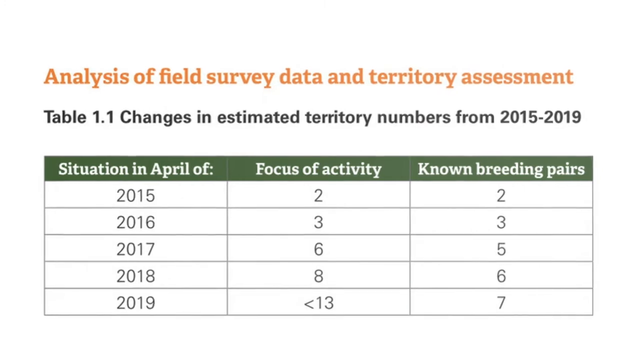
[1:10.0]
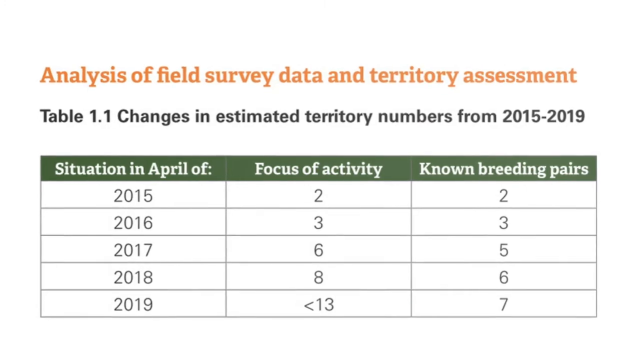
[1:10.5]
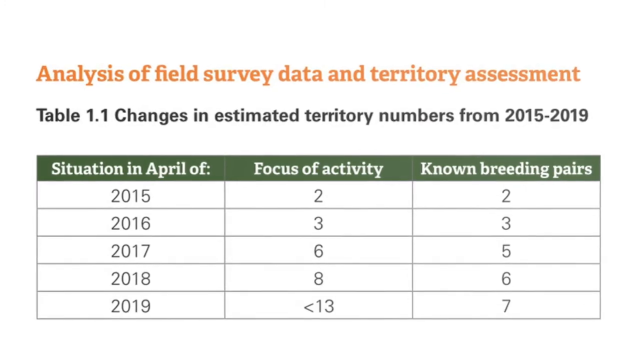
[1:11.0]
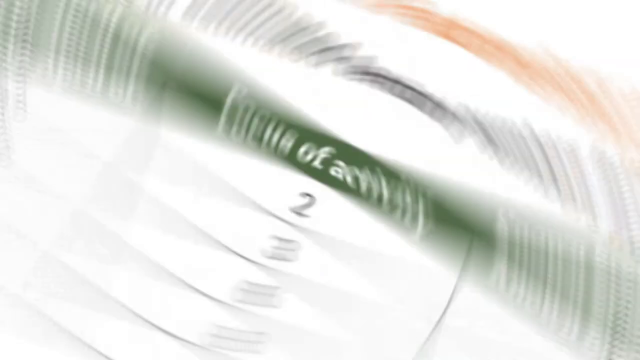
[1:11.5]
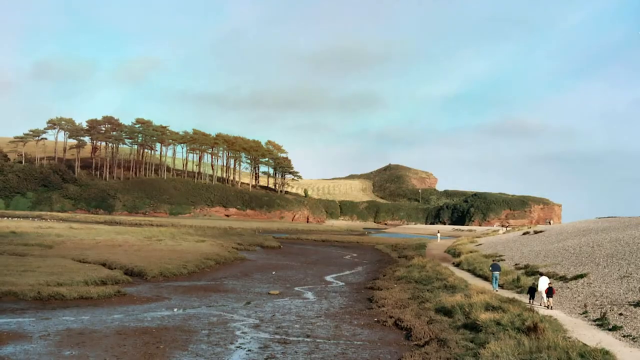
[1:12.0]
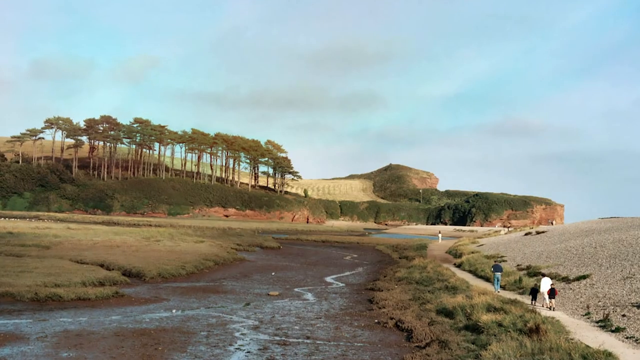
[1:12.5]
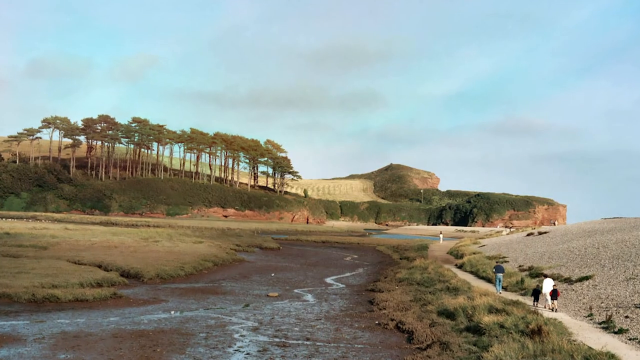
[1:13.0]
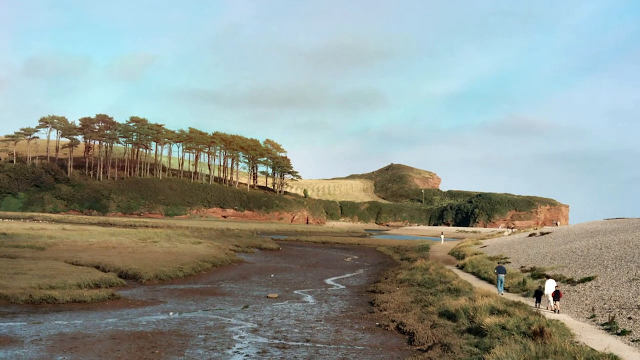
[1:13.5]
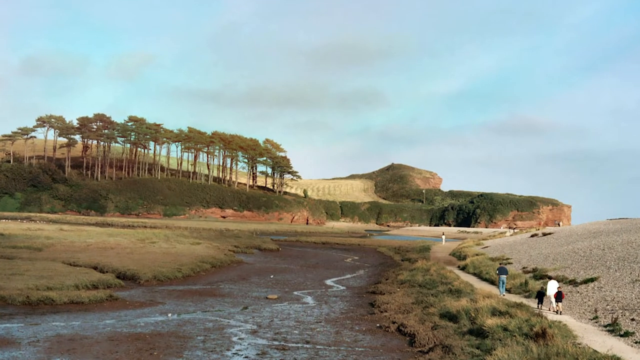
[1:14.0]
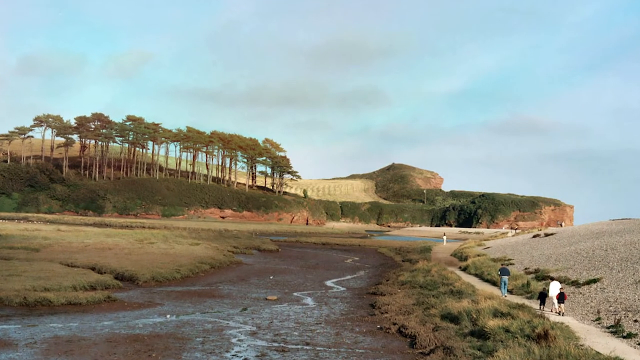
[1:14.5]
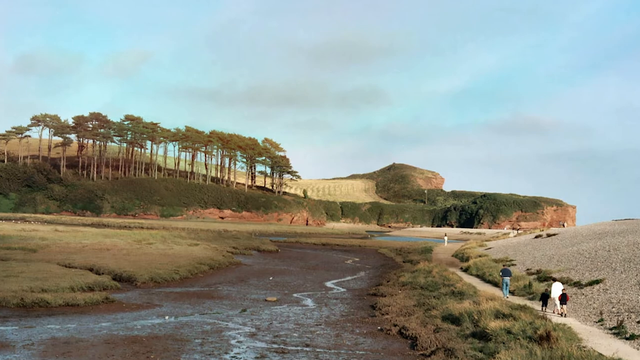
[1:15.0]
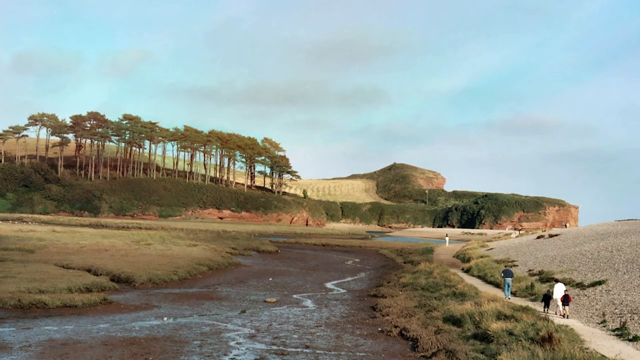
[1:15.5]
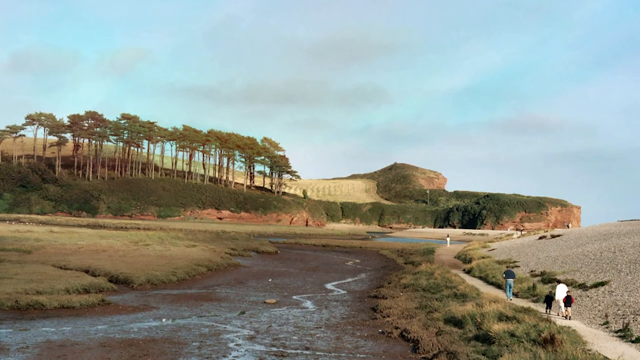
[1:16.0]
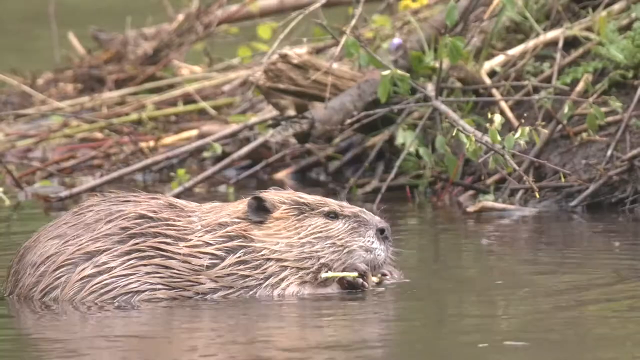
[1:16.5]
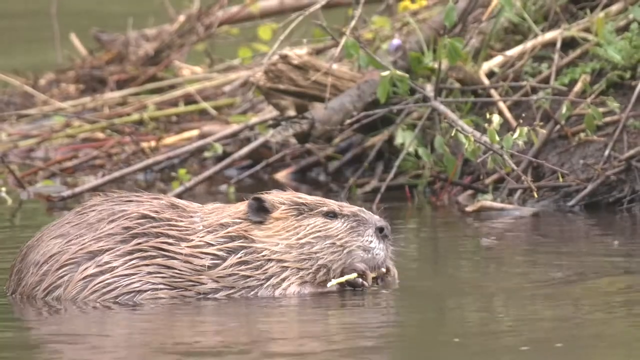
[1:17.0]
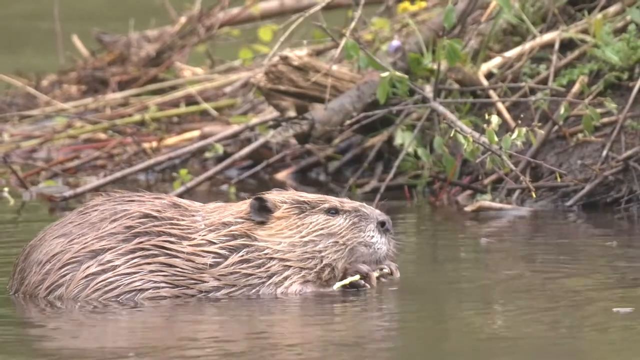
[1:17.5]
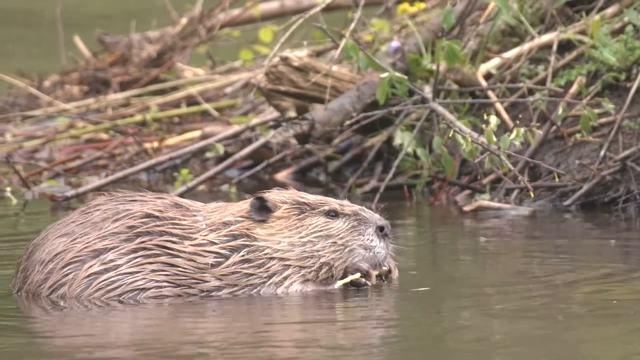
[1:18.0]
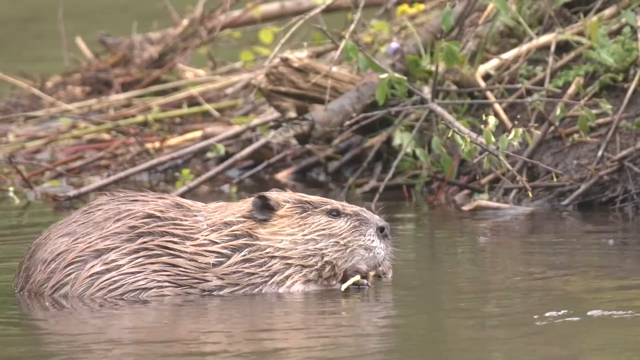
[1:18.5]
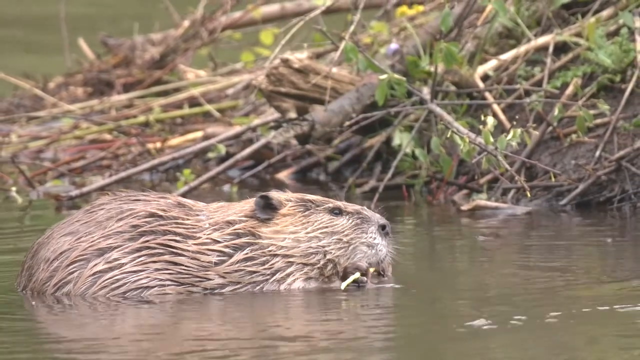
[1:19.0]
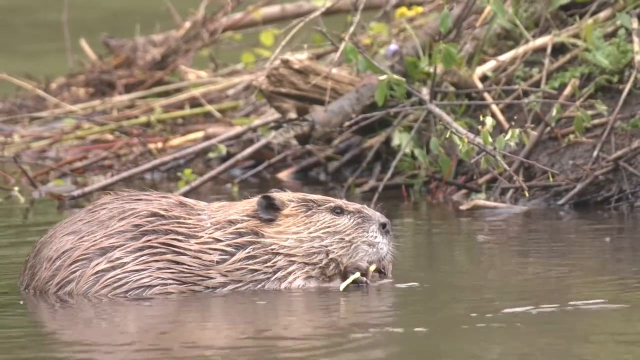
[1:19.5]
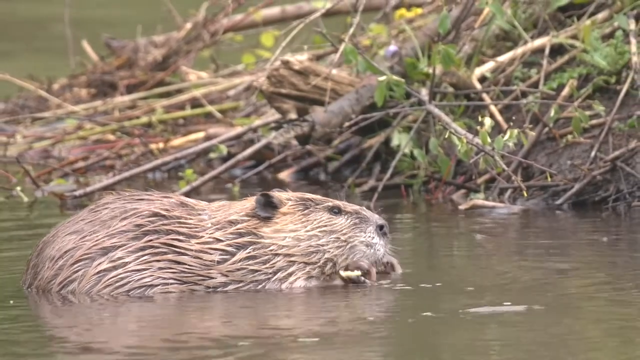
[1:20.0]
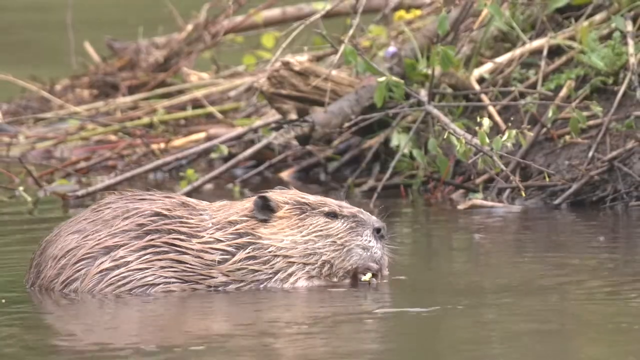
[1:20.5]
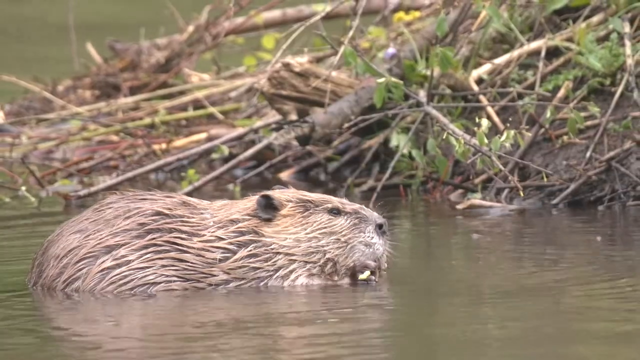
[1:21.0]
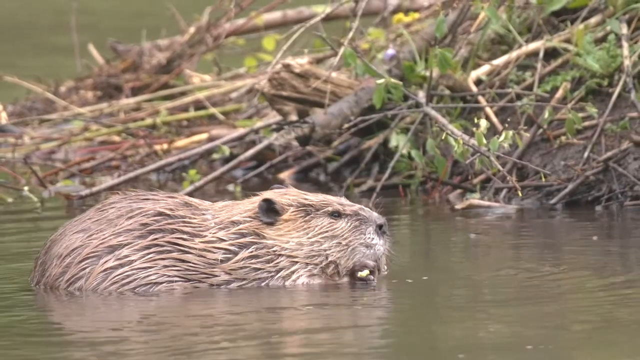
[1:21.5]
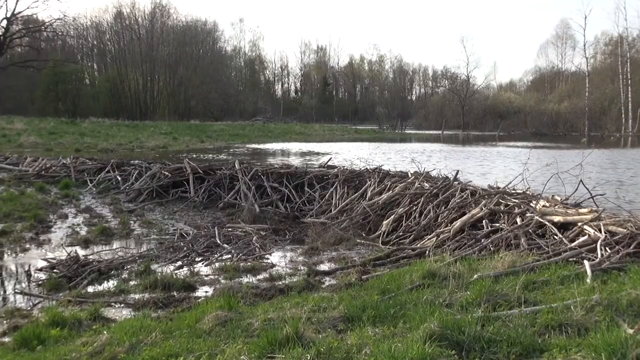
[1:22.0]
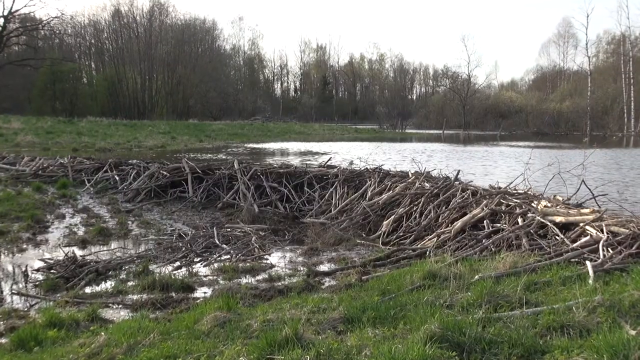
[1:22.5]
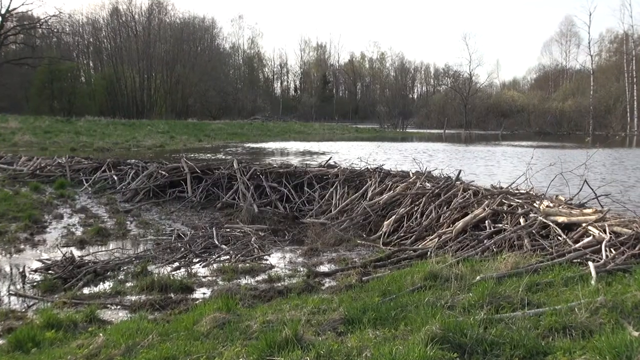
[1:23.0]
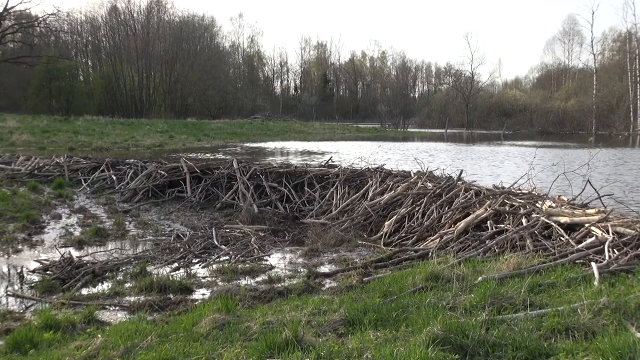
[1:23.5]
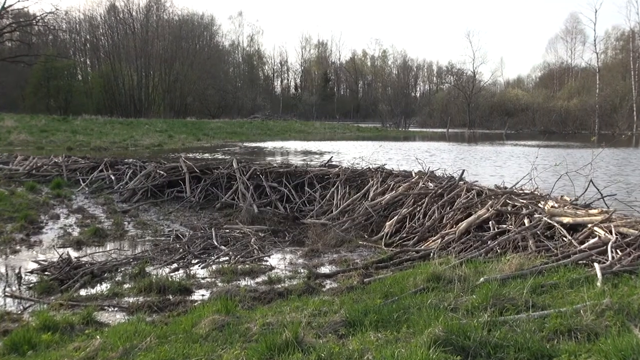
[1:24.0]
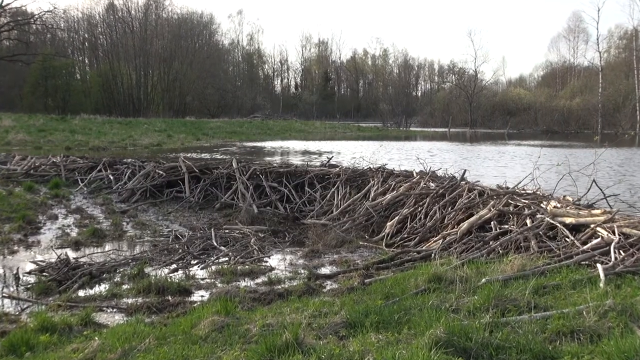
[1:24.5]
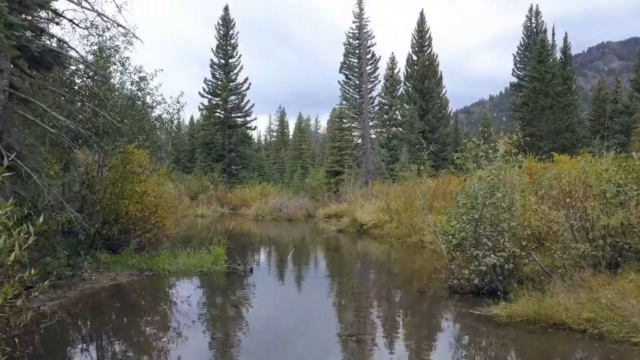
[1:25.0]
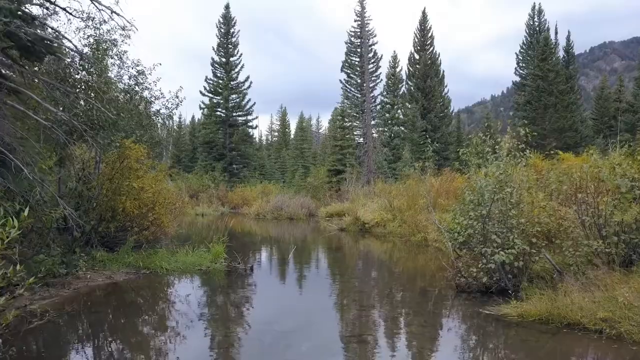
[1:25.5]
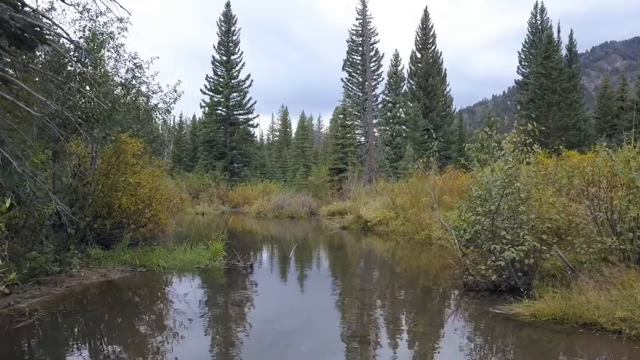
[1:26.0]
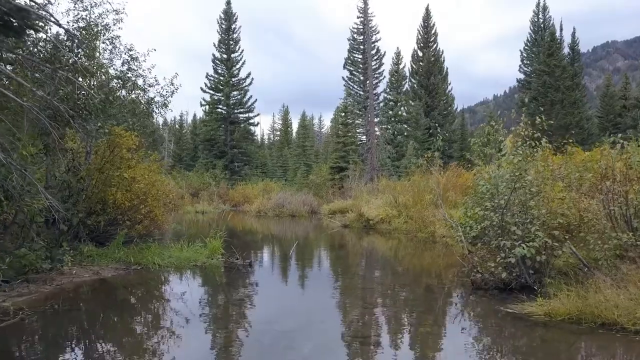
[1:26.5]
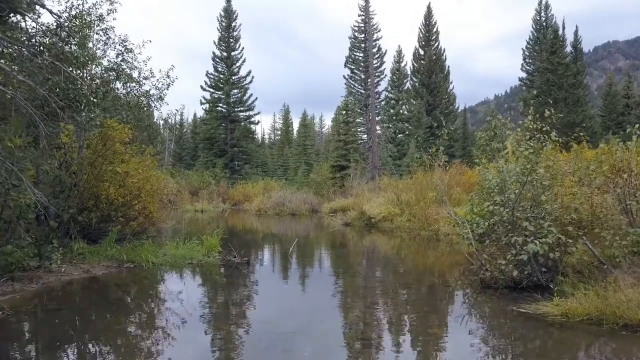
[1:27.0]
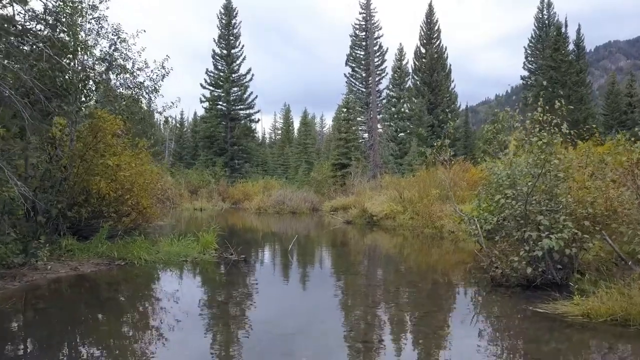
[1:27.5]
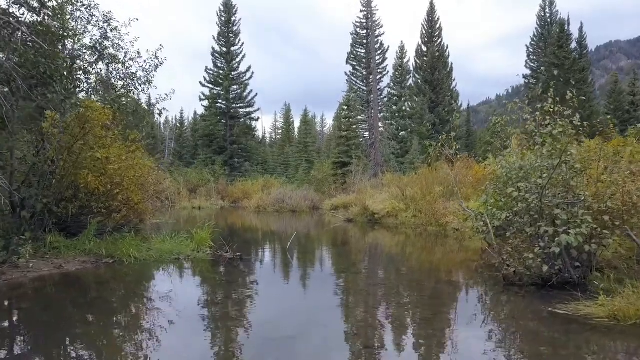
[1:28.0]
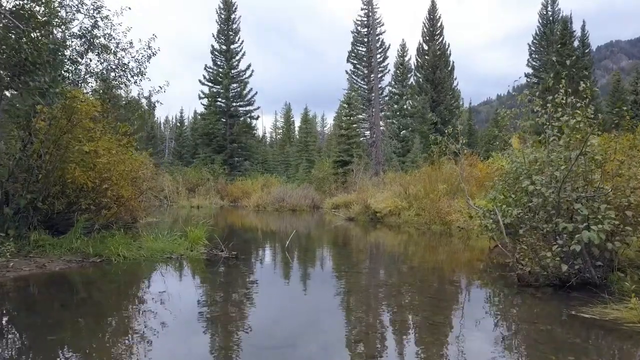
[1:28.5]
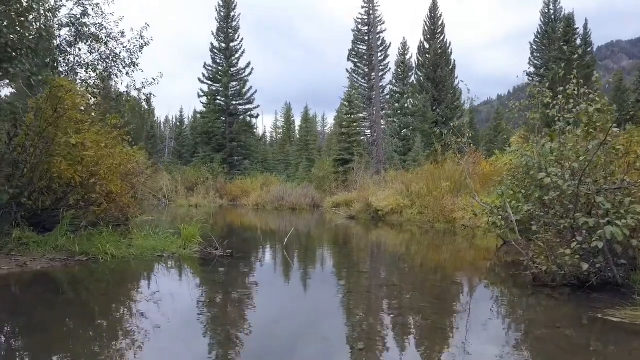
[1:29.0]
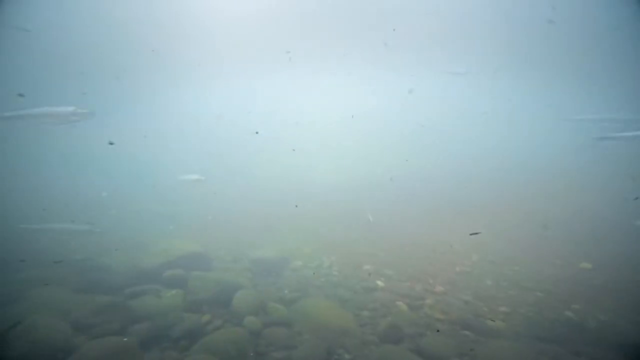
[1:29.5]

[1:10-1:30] A screenshot shows orange lettering reading "analysis of field survey data and territory assessment". Below it, in black lettering, is "Table 1.1, Changes in Estimated Territory Numbers from 2015 to 2019". A graph below has a green headline "situation in April of", next to it the headline "focus of activity", and then the category "known breeding pairs". In 2015 there were two focus of activity and two known breeding pairs; in 2016, three and three; in 2017, six and five; in 2018, eight and six; in 2019, greater than 13 focus of activity and seven known breeding pairs. The video transitions to an outdoor scene with a flowing shallow river and short green-brown grass on both banks. On the right bank is a narrow path, and a man, a woman, and two small children walk up it. There is a small sandy hill to the right, and ahead is a medium-sized grassy hill with a variety of trees on its left side. The sky is light blue with various gray clouds. Next, a beaver half-submerged in water chews on a stick it holds between both paws. Then a dam built in a river is shown, likely built by beavers; it is holding the water back and has created a pond-like area. The dam is built of a variety of sticks, large, medium, and small in size. The video transitions to an outdoor wooded scene with pine trees, brush, and a shallow, narrow creek. The view pans forward at water level and then shows the area under the water level, where there are small silver fish.